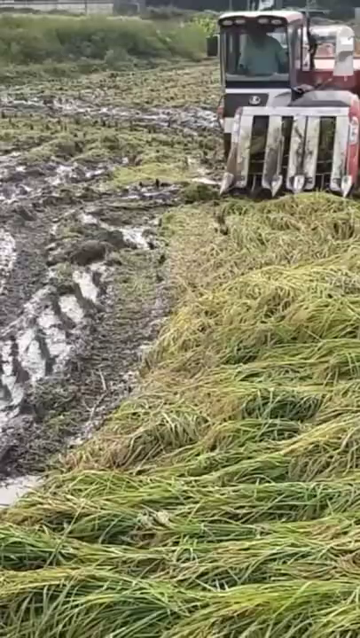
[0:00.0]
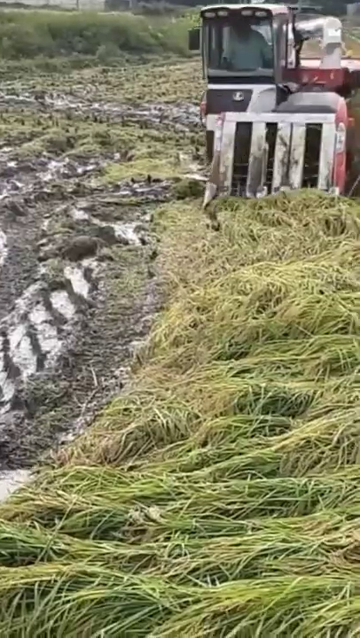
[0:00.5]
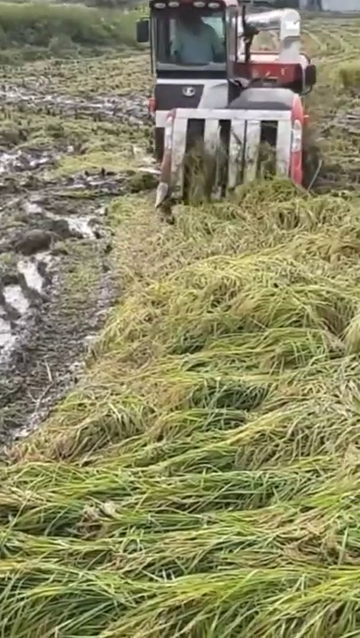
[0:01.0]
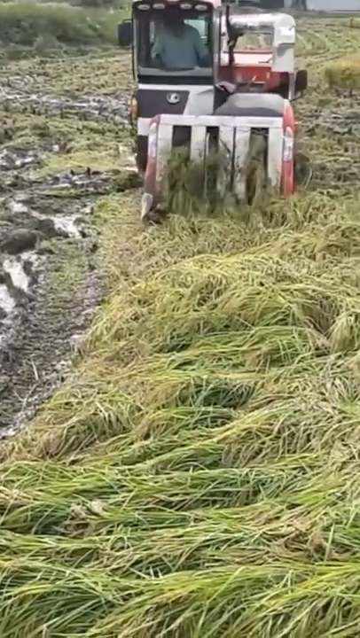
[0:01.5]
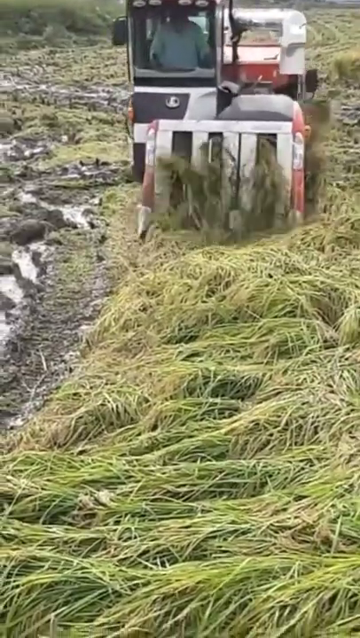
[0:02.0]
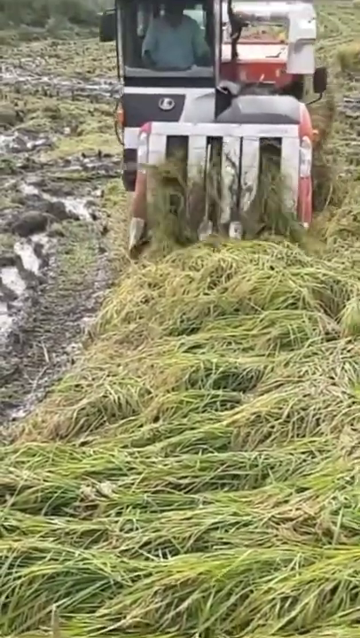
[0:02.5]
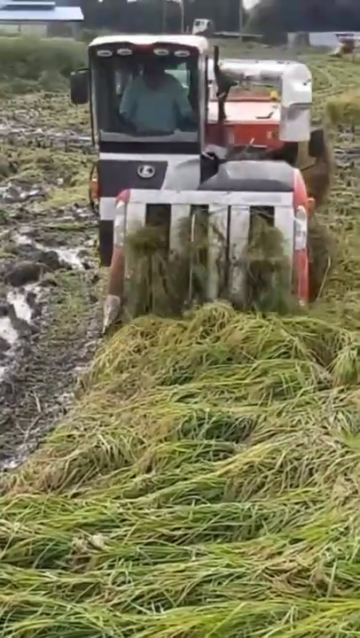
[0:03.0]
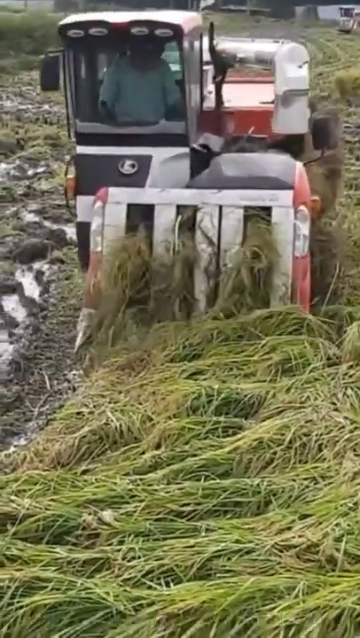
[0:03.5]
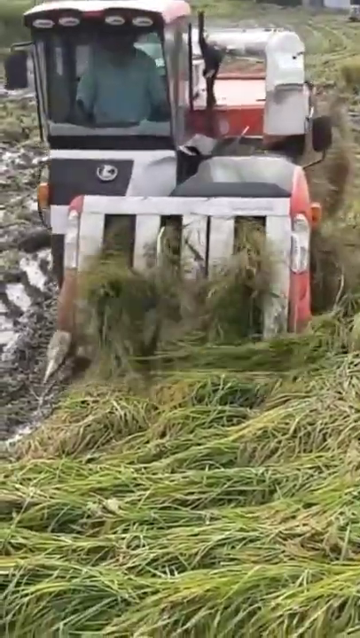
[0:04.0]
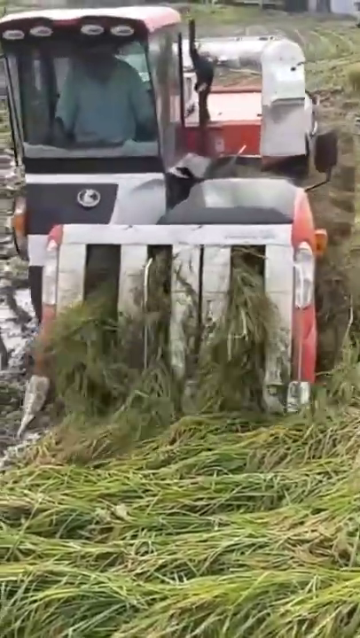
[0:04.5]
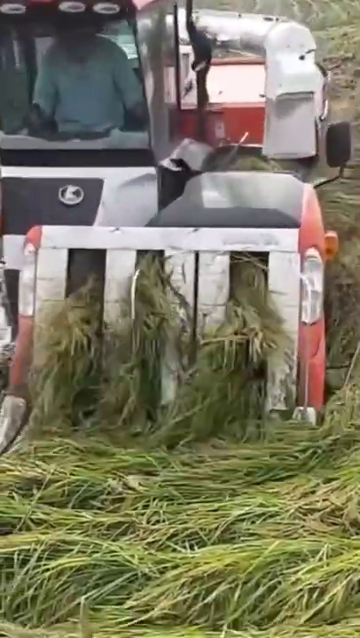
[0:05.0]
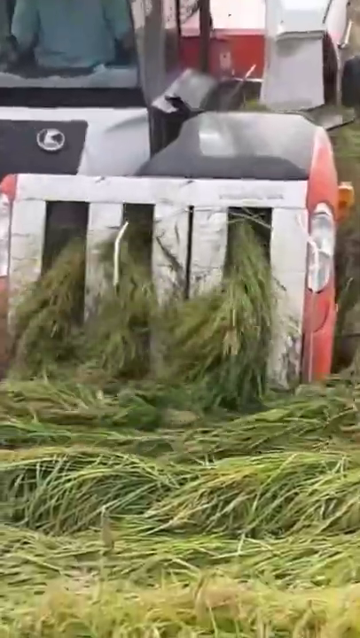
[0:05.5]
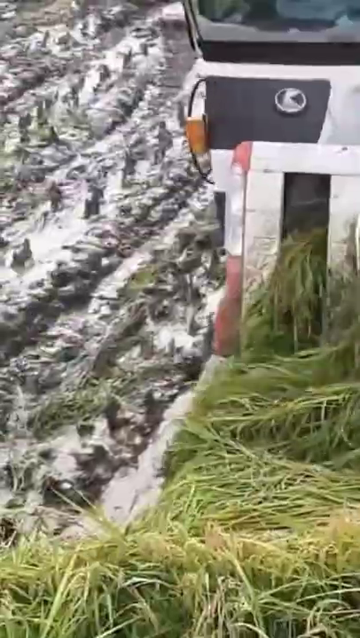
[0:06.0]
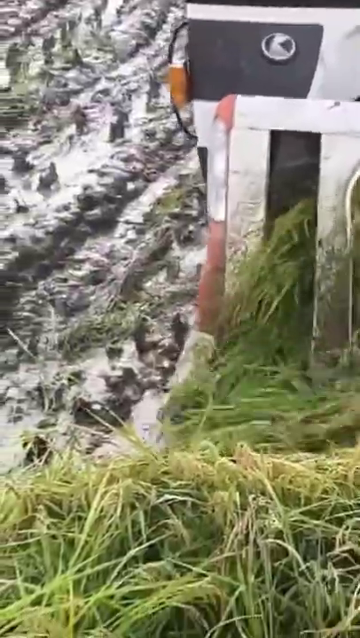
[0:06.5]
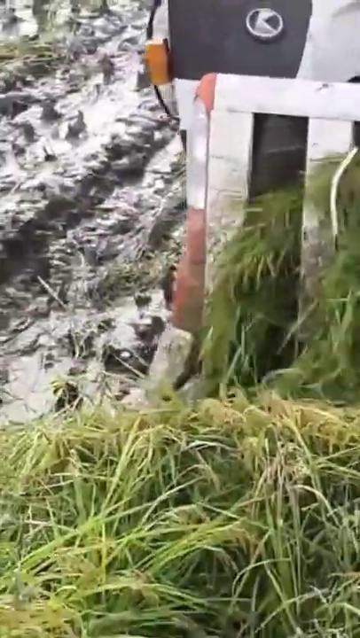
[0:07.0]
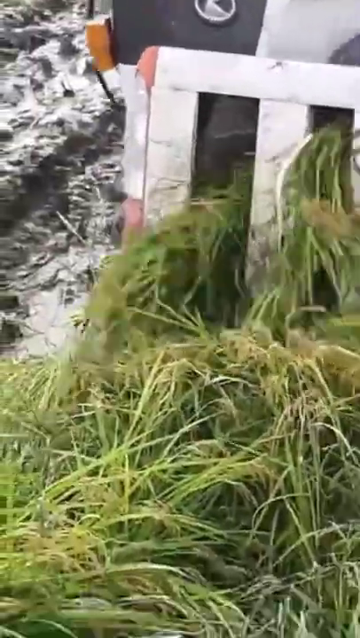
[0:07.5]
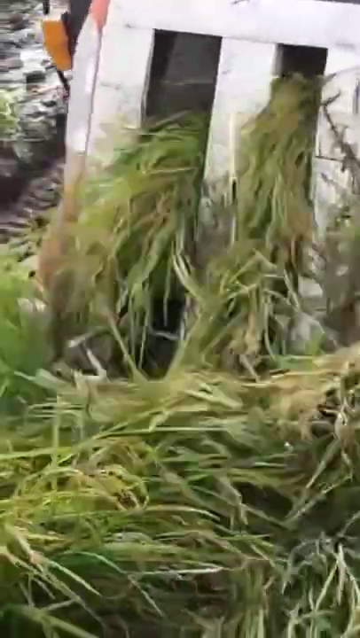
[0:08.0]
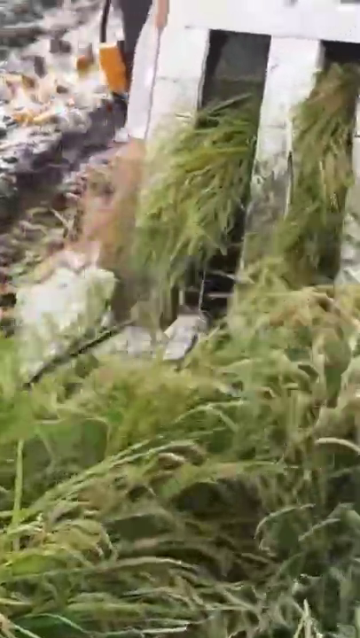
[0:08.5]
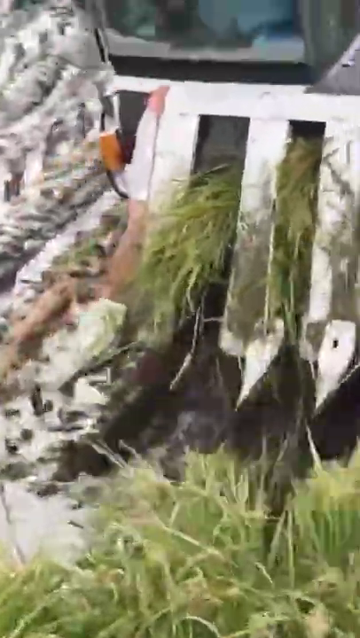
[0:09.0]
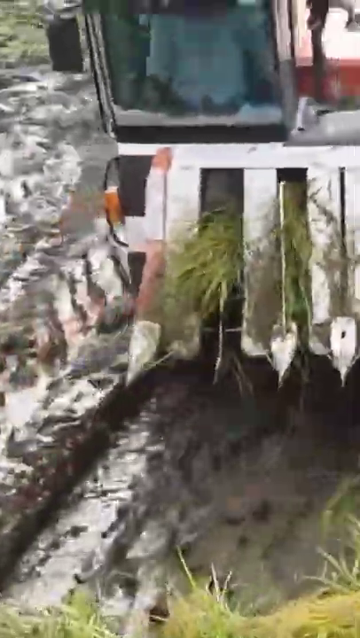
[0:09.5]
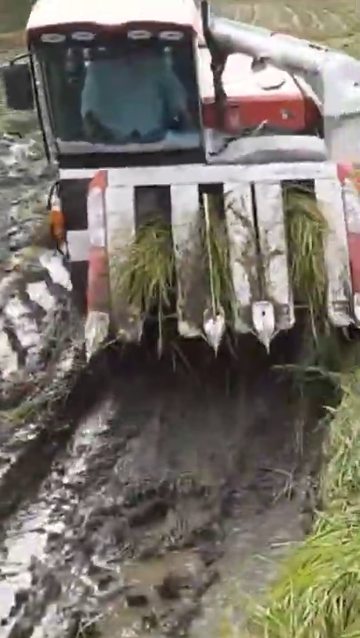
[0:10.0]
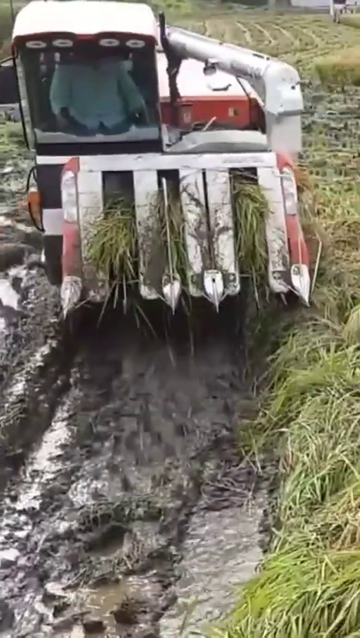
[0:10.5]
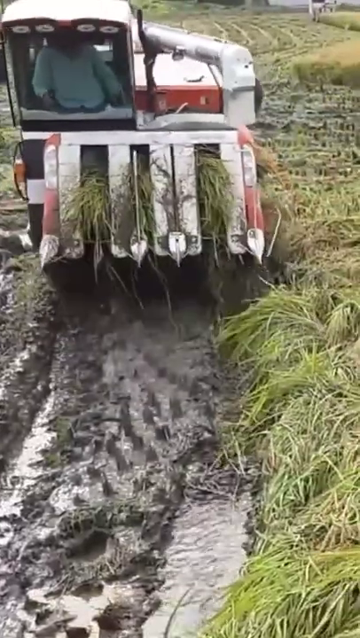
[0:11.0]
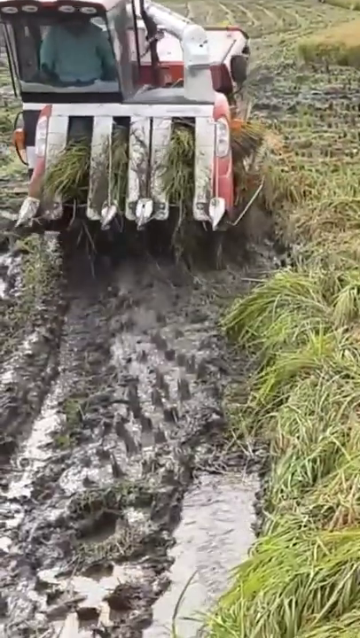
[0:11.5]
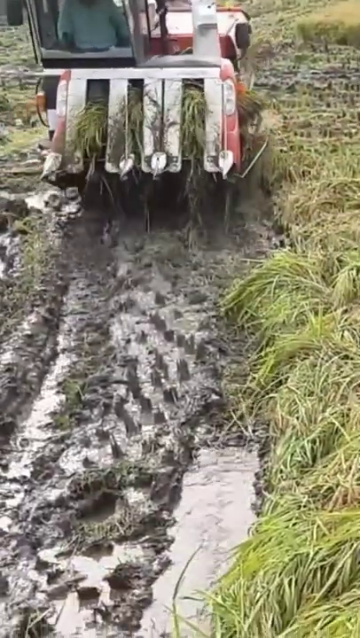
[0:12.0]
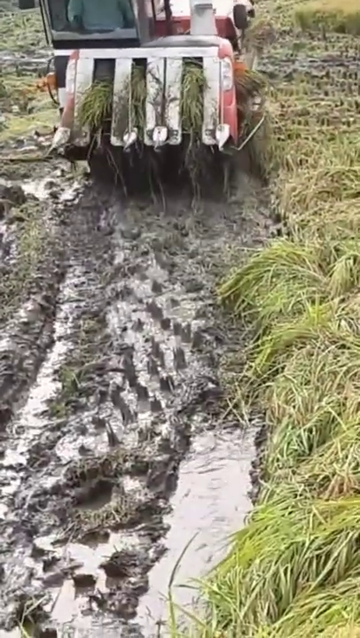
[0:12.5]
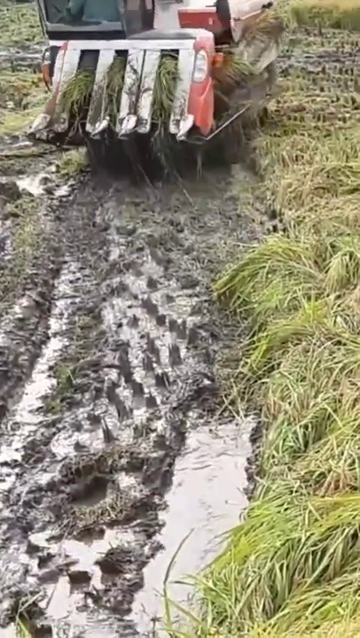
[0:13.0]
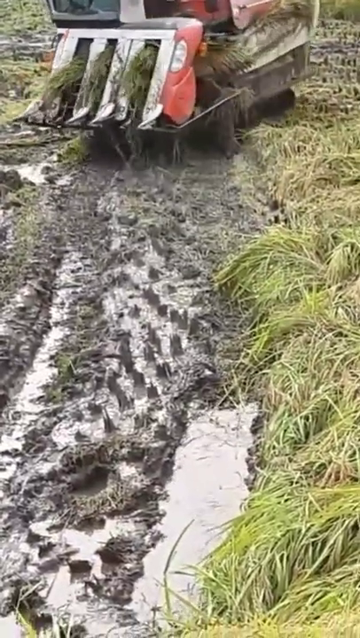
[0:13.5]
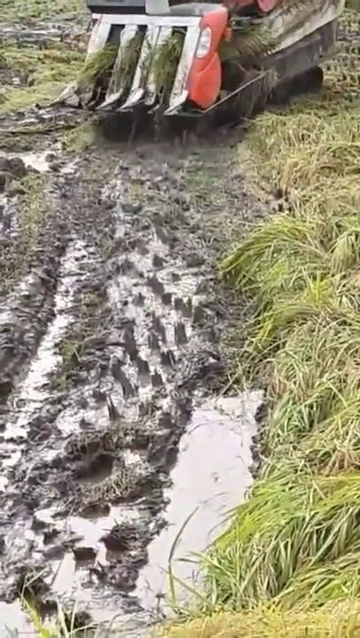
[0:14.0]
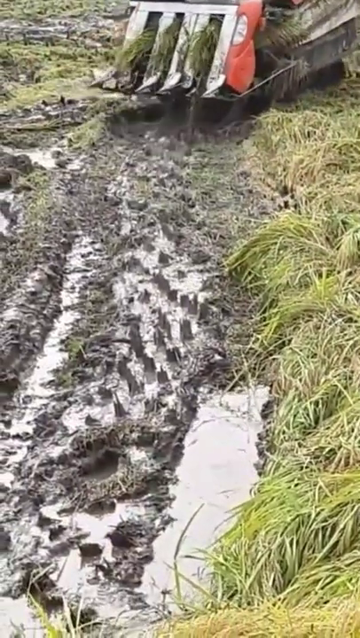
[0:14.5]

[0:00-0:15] A person inside a small industrial vehicle drives it, operating it from the left side of the vehicle, which is on the left of the frame. The vehicle appears to be mowing and sucking up long green grass that appears to have already been cut, seemingly plowing through a small area and sucking up the grass in its path. It has some sort of claw-like structure on its front. The vehicle moves forward toward the camera, then backs away, drifting off to its initial position as it drives away toward the top right-hand corner.